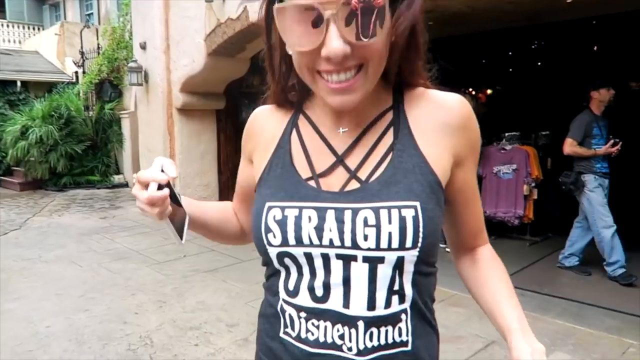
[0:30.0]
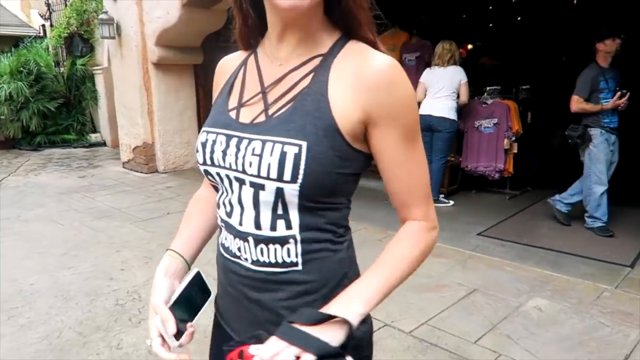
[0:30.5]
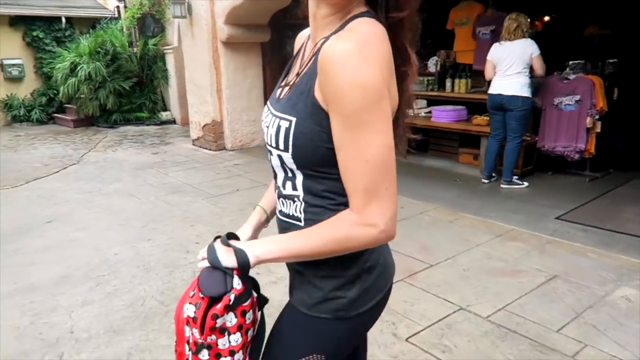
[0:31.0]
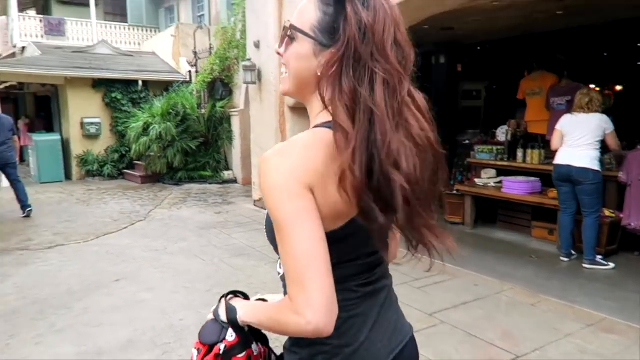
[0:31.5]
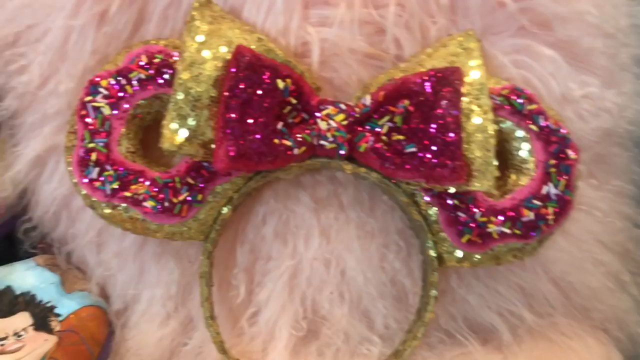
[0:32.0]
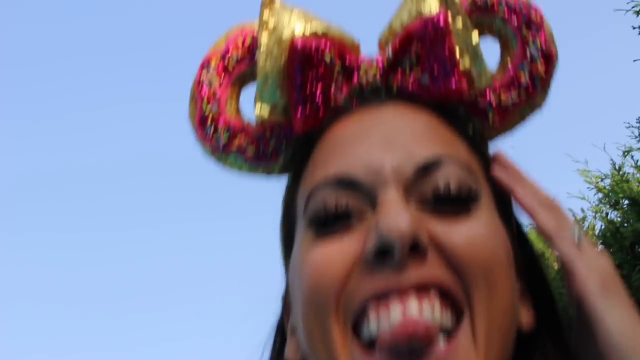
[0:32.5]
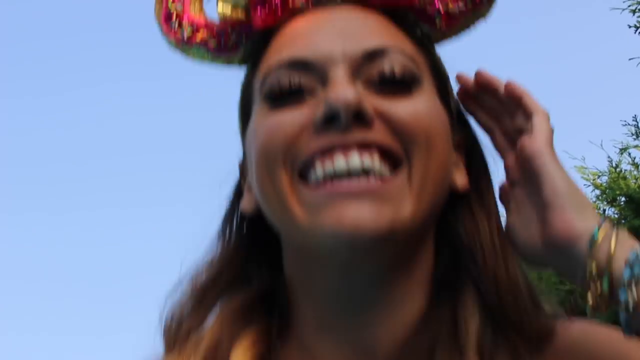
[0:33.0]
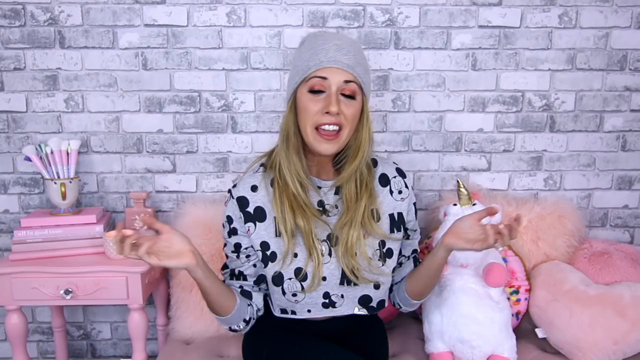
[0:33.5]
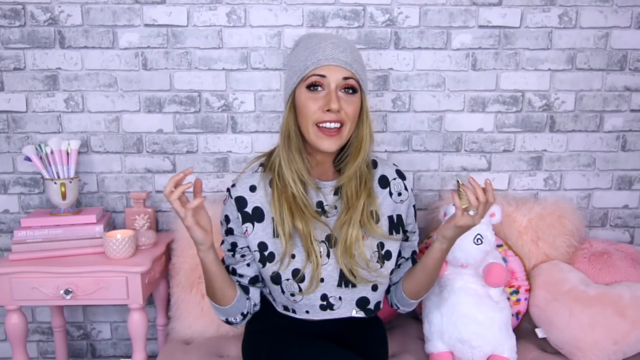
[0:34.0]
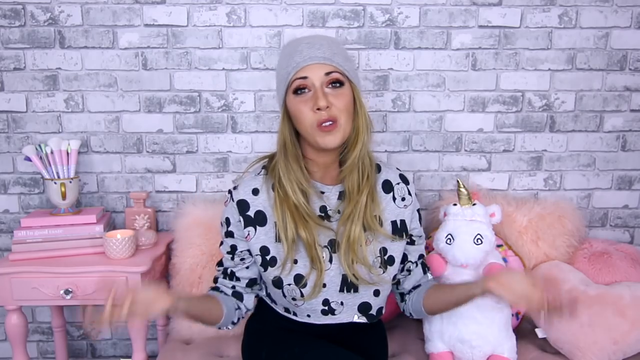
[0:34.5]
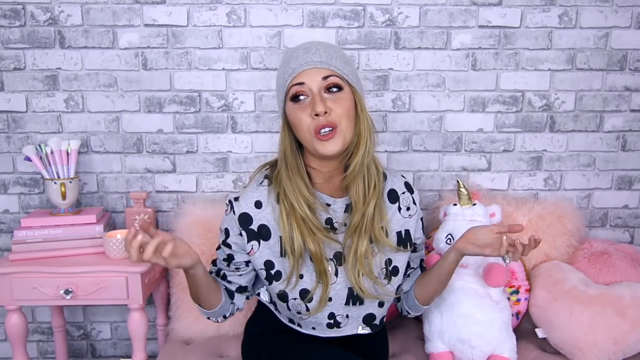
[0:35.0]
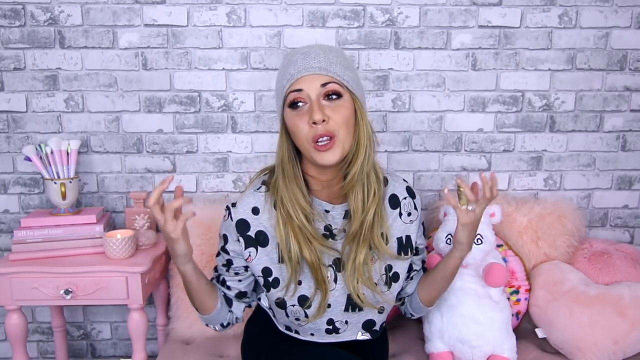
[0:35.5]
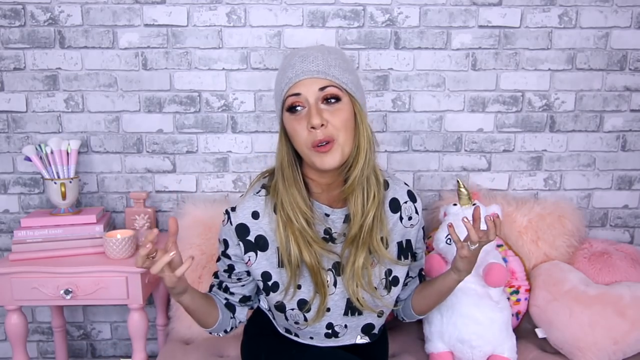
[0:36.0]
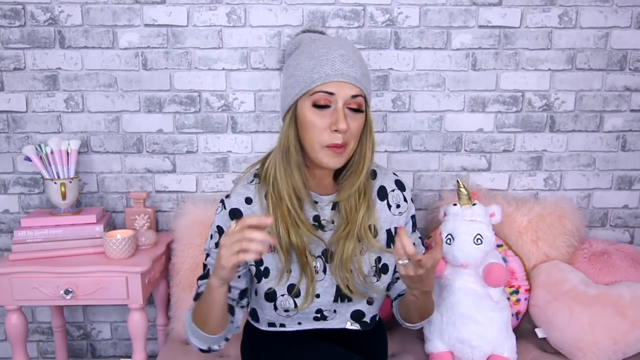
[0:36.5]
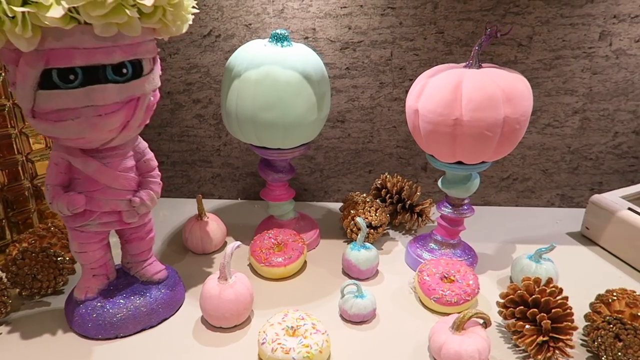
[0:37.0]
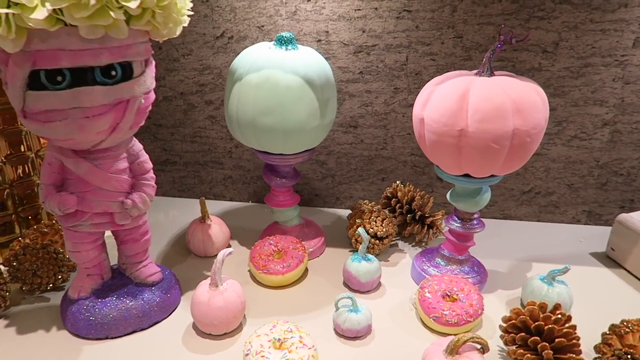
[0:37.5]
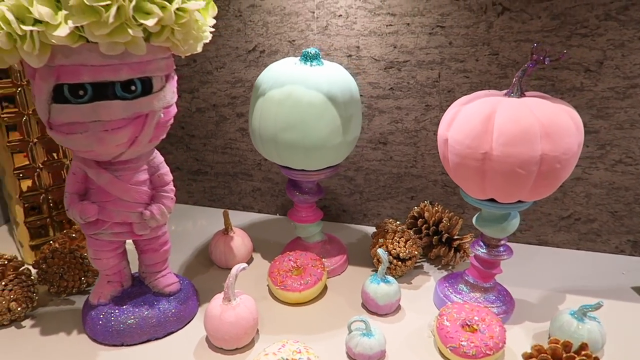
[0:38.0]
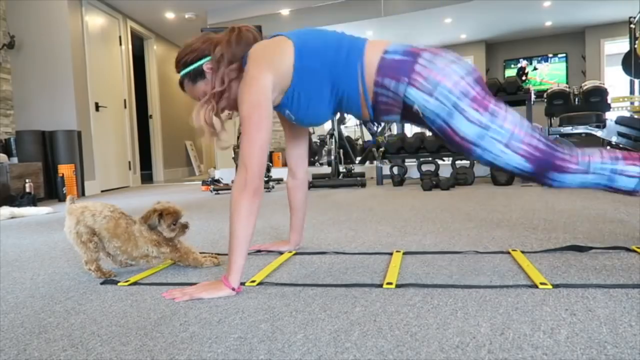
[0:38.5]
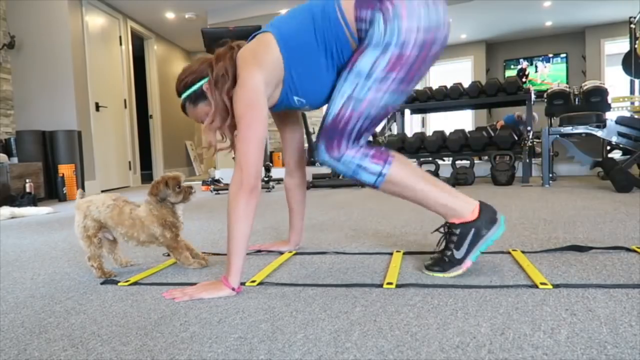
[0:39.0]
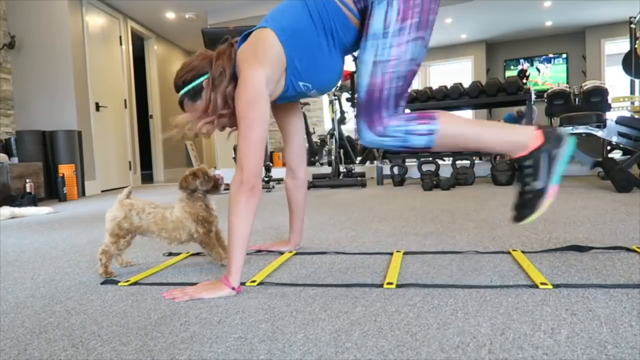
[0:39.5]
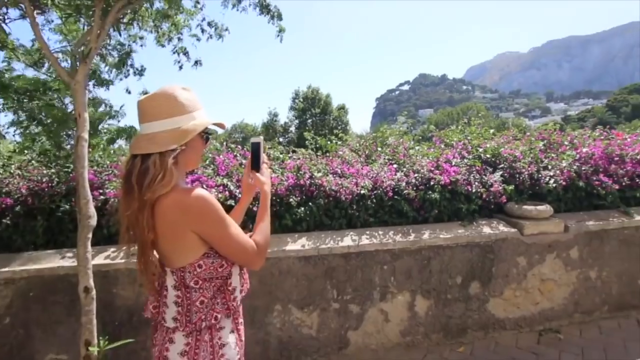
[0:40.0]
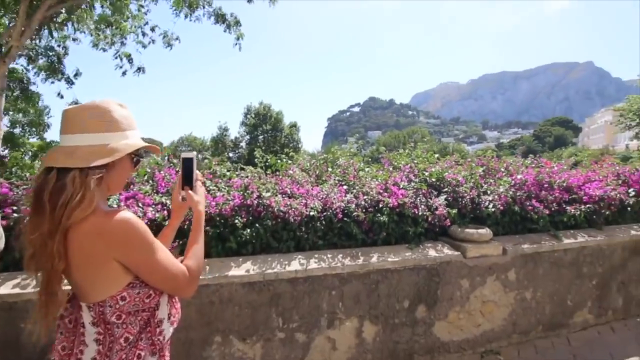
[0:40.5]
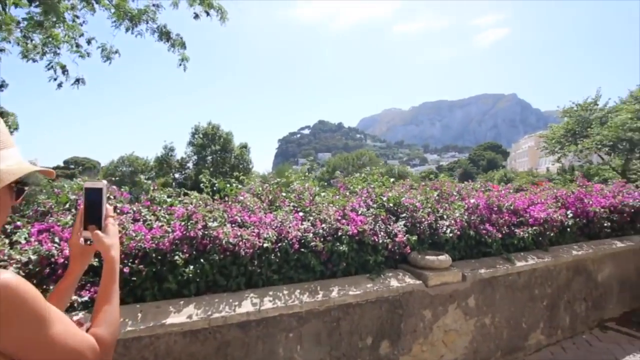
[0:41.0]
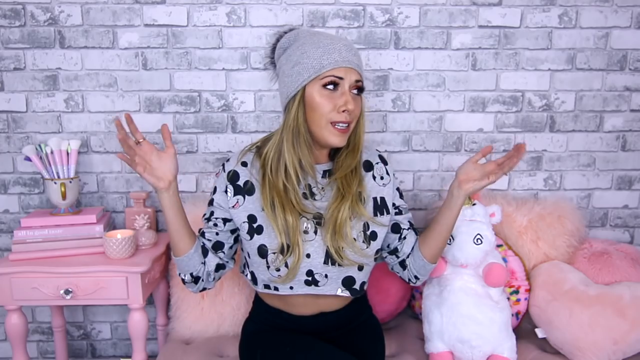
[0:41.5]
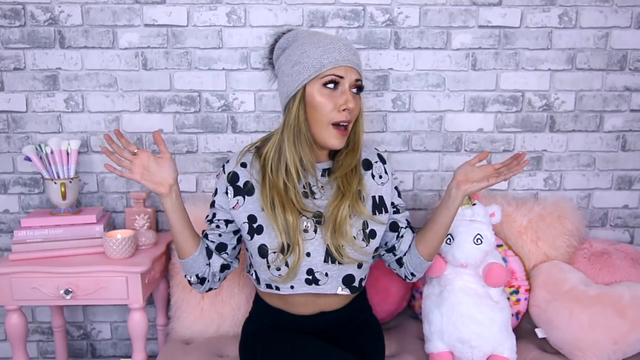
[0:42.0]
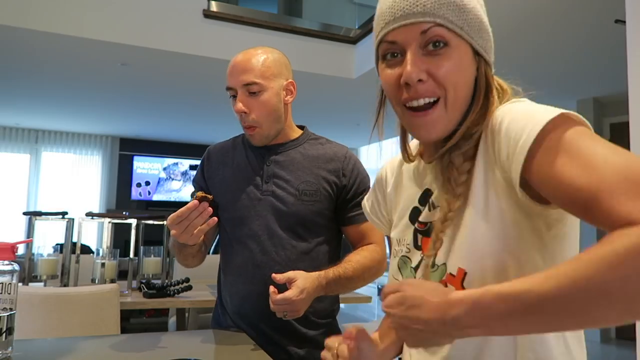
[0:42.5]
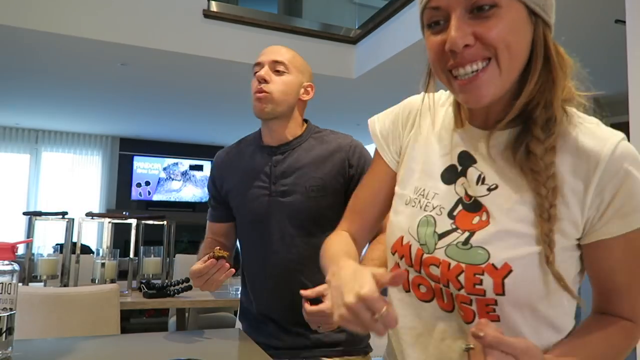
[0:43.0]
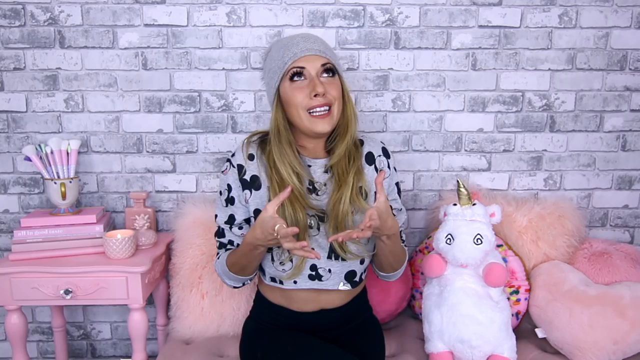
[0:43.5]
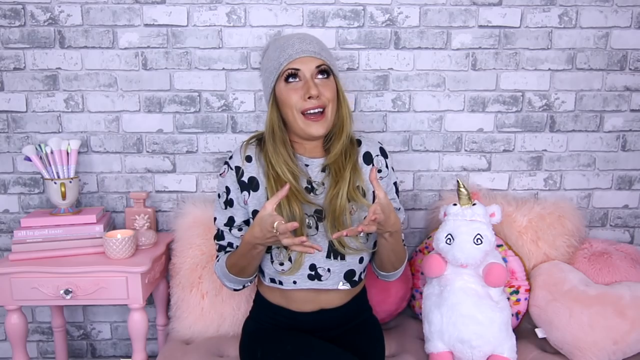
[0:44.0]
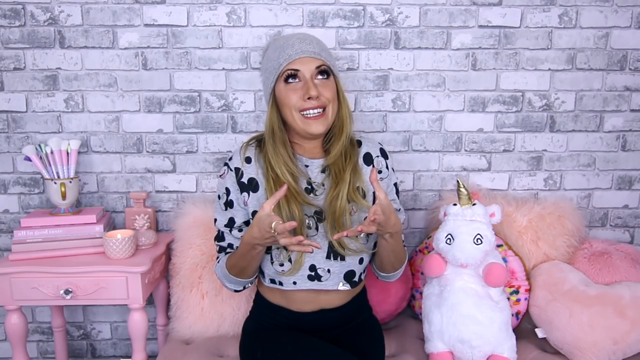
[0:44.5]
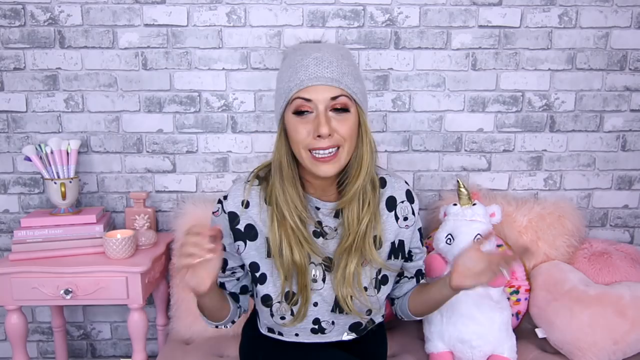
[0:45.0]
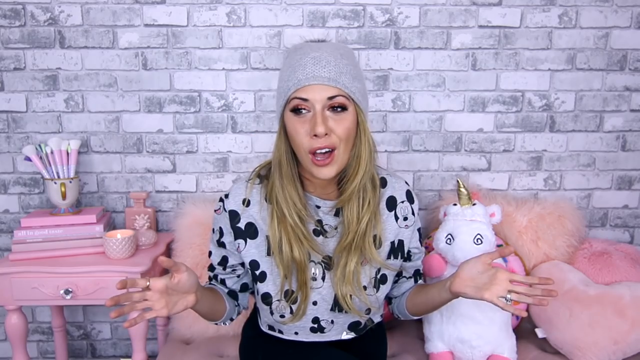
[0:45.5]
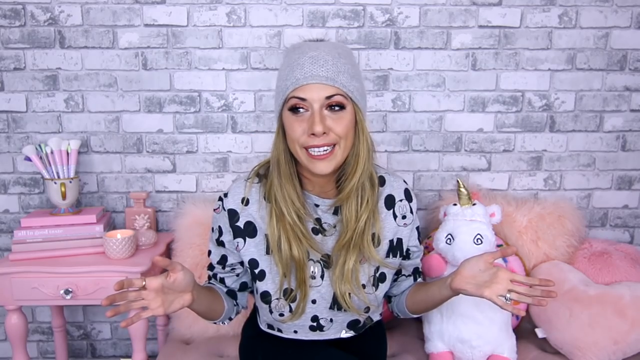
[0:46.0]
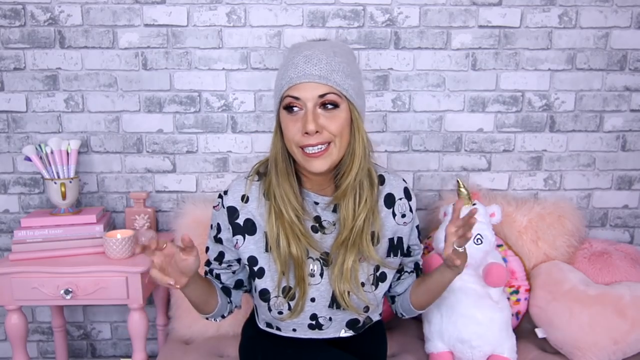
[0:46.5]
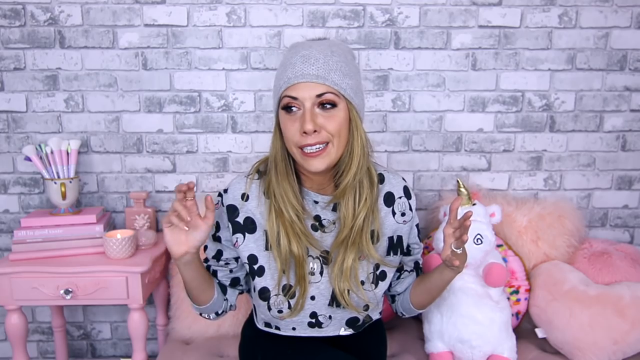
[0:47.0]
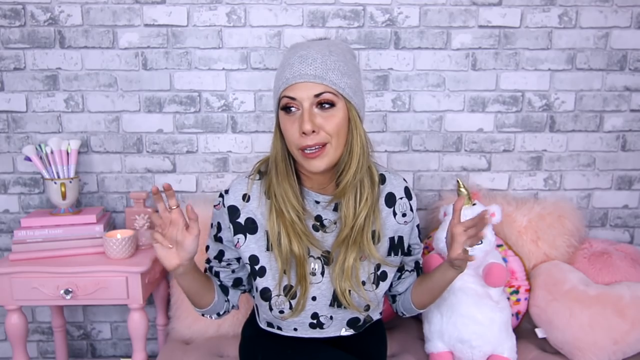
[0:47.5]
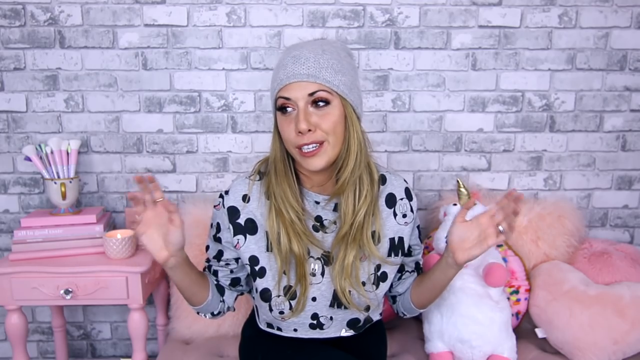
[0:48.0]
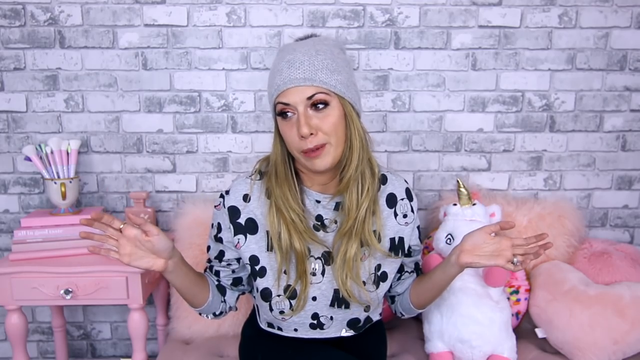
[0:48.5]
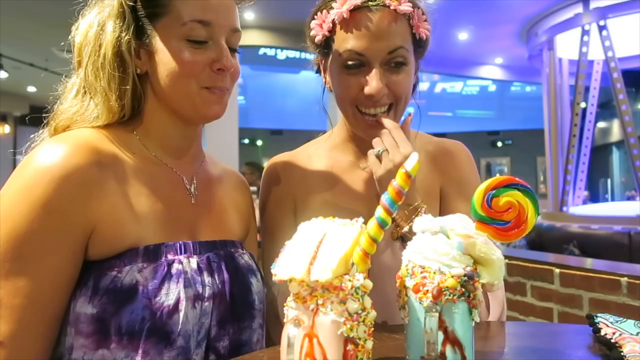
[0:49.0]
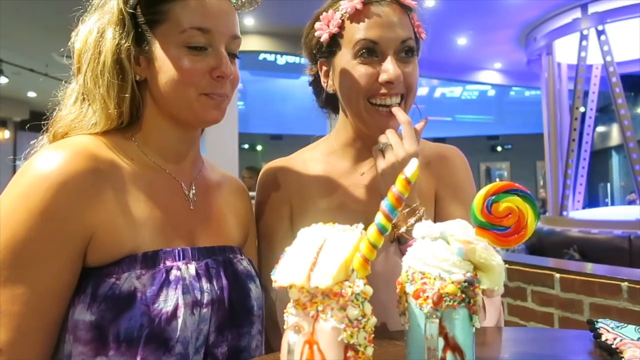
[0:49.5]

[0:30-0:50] A close-up shot shows a woman holding her smartphone in her right hand. She wears glasses, has brownish dark hair, and wears a sleeveless black top with the text "Straight Outta Disneyland" printed on the front. A slightly wider view shows her turning around to walk away. A close-up of a decorative, colourful headband appears briefly, followed by possibly the same woman wearing it on her head, grinning and sticking out her tongue with her upper teeth visible, in a close-up of her face against the blue sky. More decorative items are shown briefly, and then the woman sits on a pink couch with many pink-themed items around her, in front of a brick wall design mainly in different shades of grey. She stretches her hands and gesticulates with them while talking to the camera. A table with colourful items, many of them pink, purple, green and yellow, is shown. Sped-up footage shows the woman exercising in a gym with a little dog in front of her. Next, the woman holds a smartphone and appears to be taking a picture in nature. A man and a woman dance in a place that looks like a gym. The earlier woman is shown again sitting on the pink couch as she continues to talk. Then two women hold a colourfully decorated drink; the earlier woman appears to be one of them.